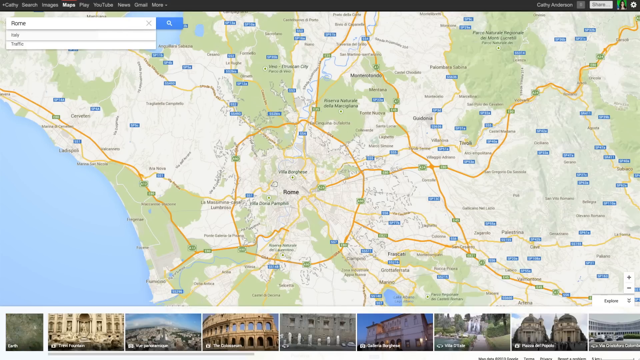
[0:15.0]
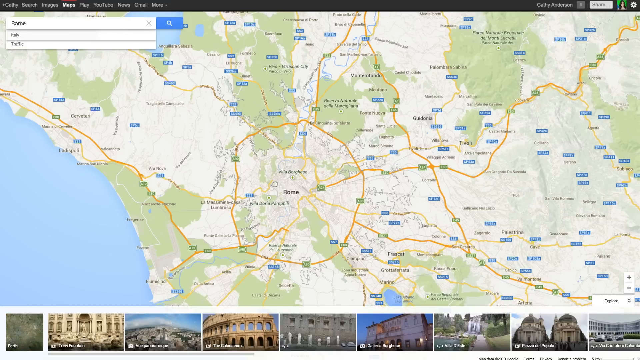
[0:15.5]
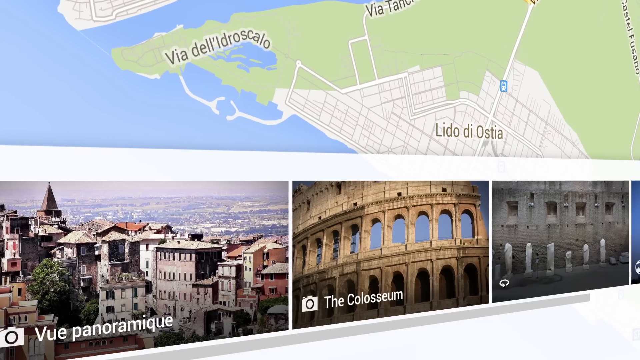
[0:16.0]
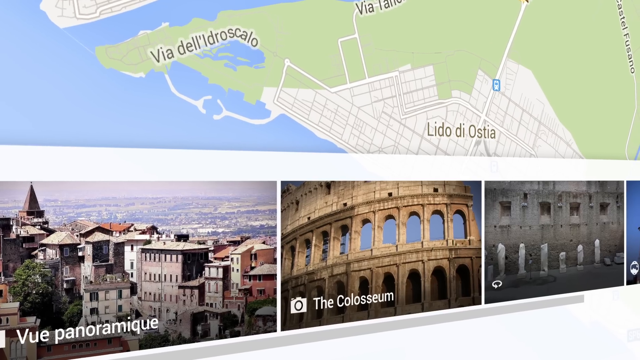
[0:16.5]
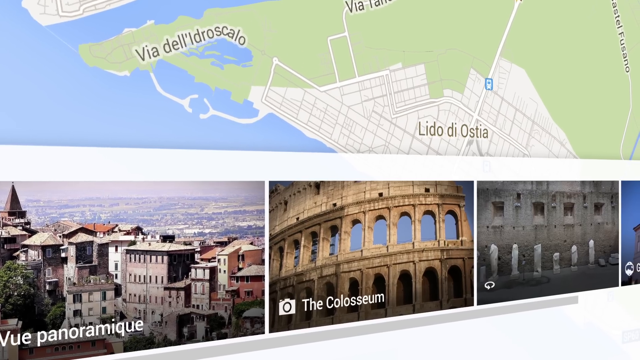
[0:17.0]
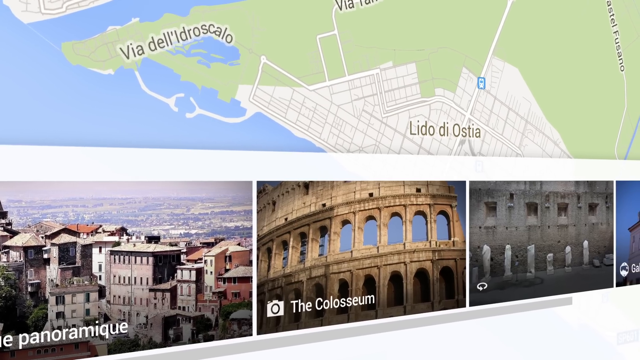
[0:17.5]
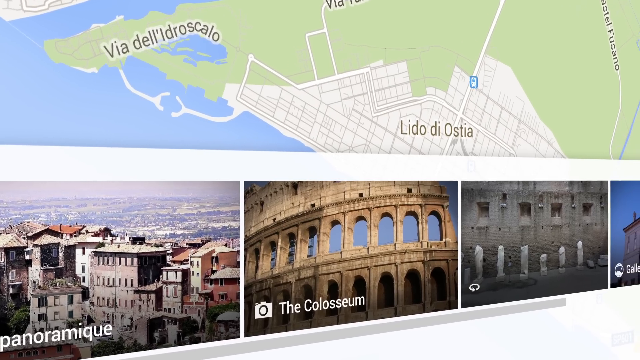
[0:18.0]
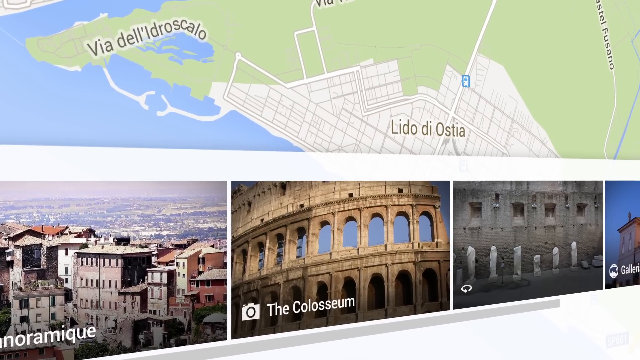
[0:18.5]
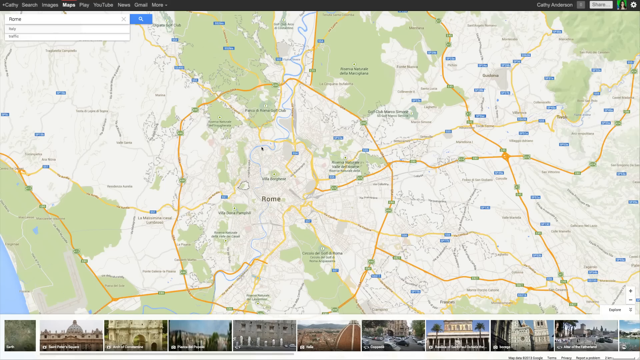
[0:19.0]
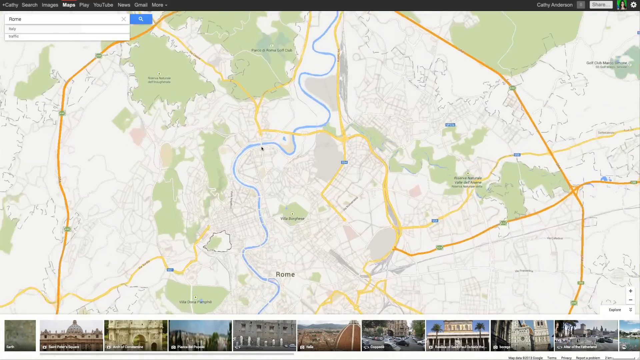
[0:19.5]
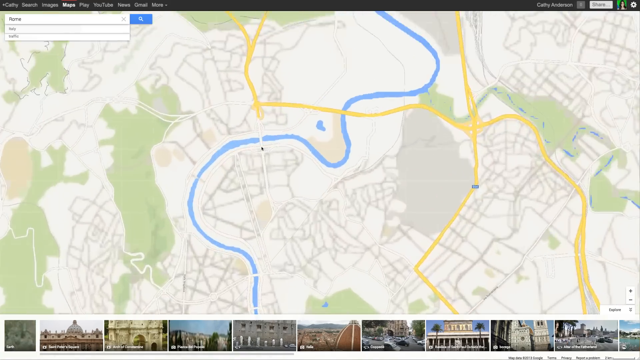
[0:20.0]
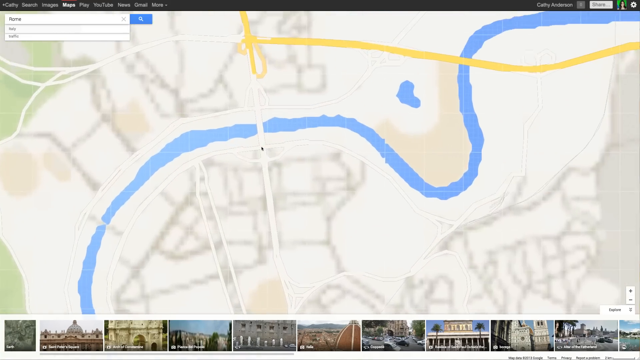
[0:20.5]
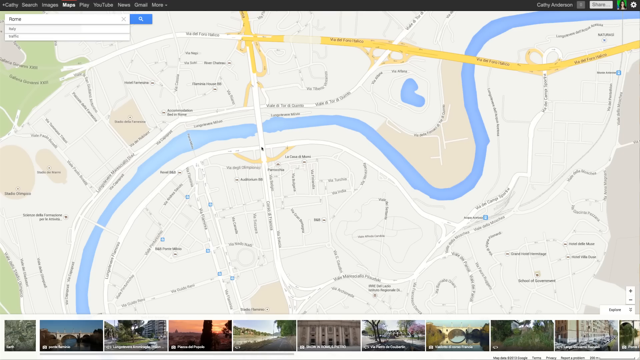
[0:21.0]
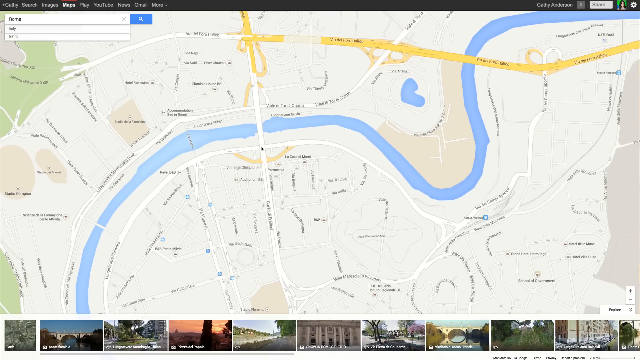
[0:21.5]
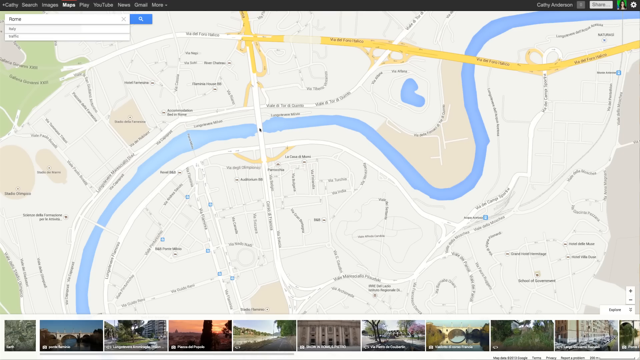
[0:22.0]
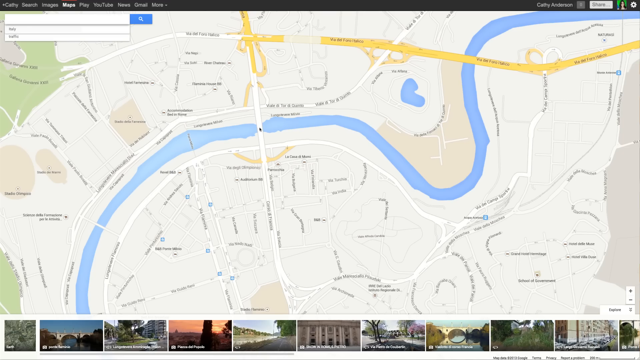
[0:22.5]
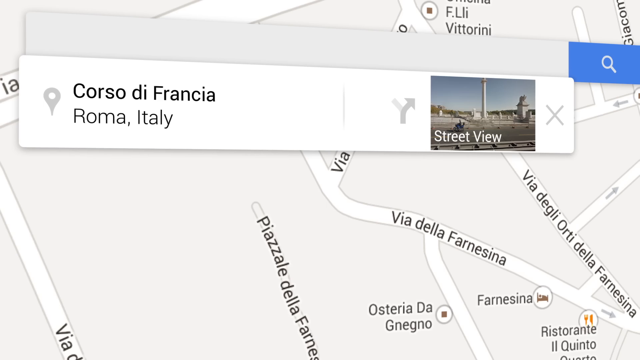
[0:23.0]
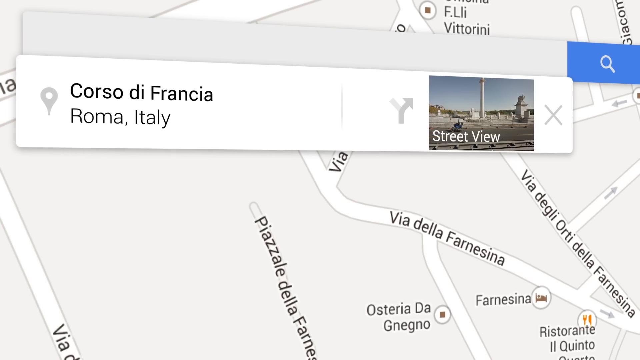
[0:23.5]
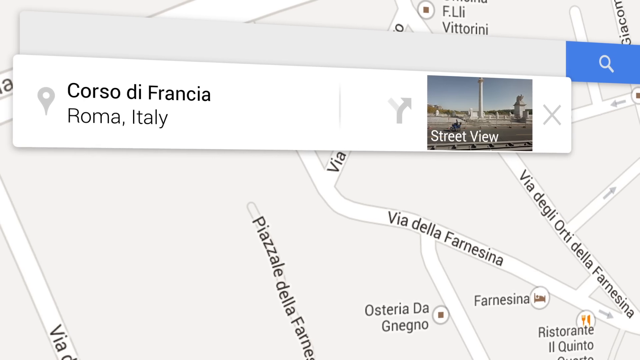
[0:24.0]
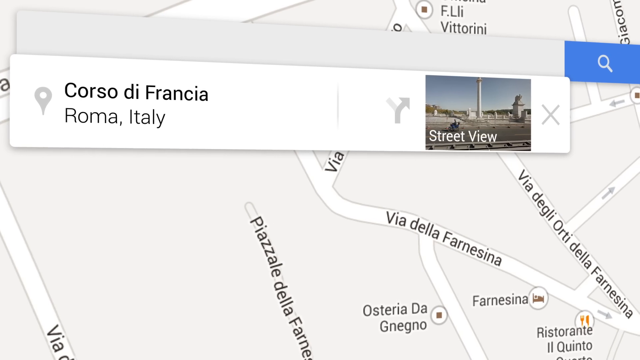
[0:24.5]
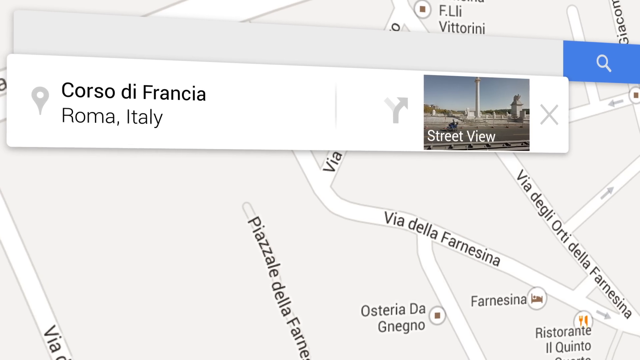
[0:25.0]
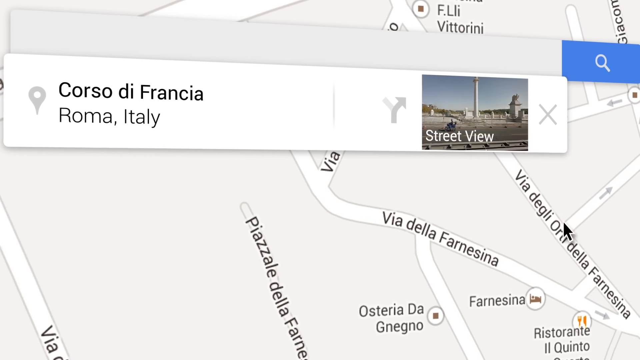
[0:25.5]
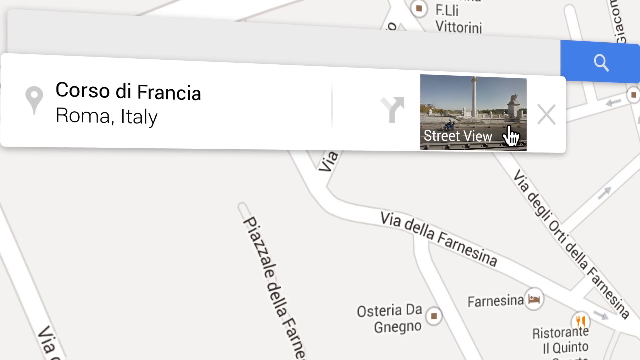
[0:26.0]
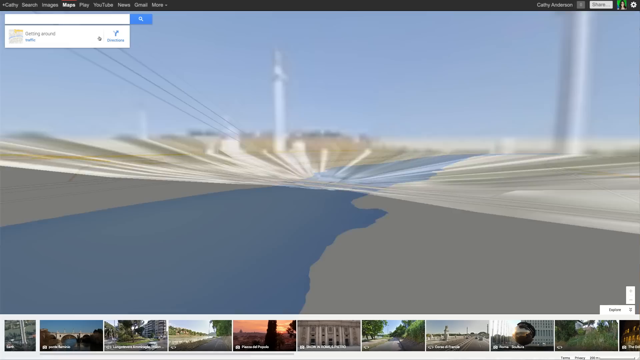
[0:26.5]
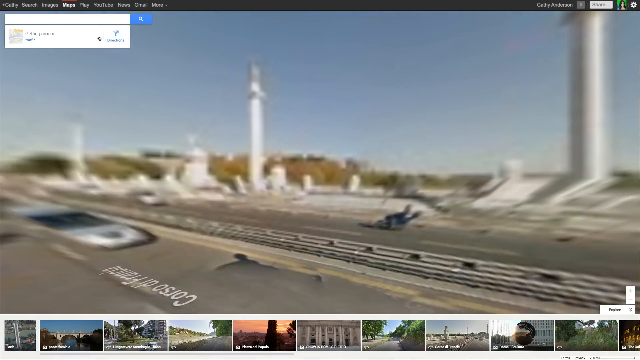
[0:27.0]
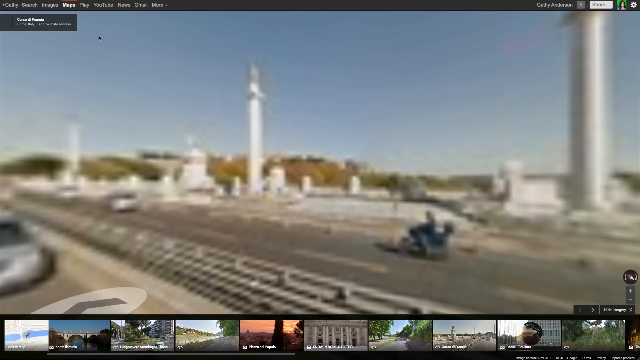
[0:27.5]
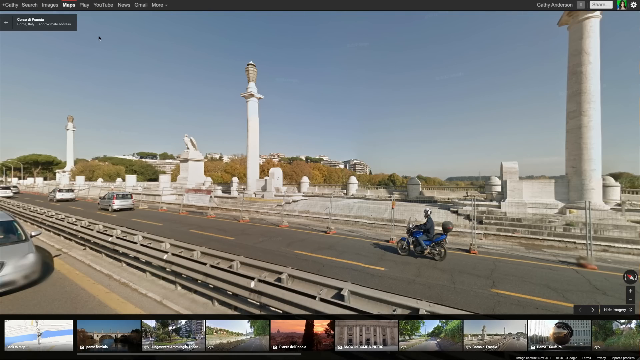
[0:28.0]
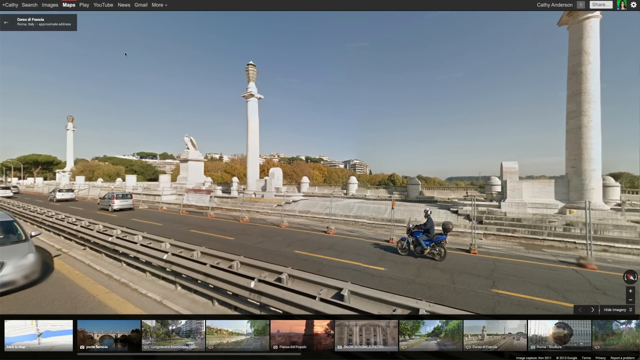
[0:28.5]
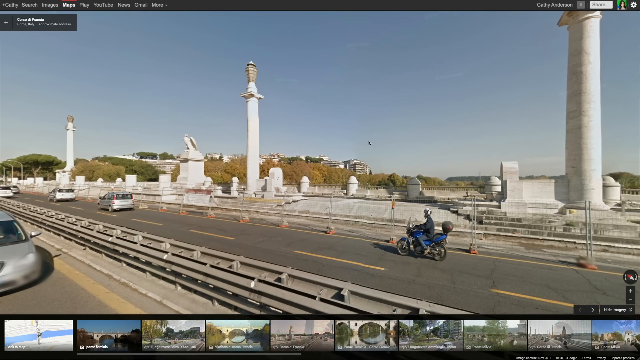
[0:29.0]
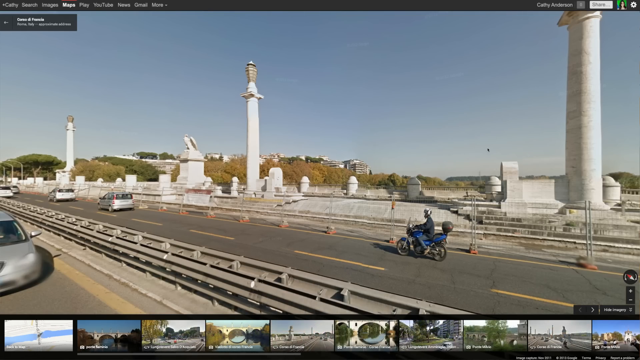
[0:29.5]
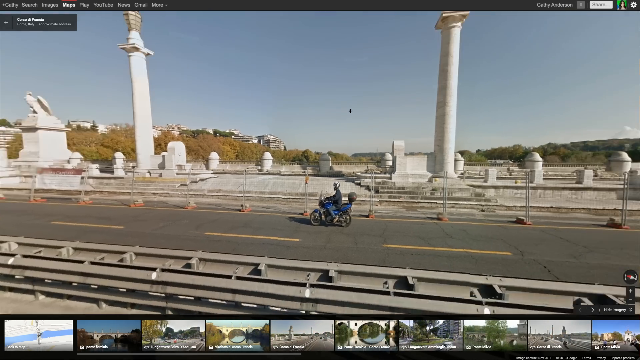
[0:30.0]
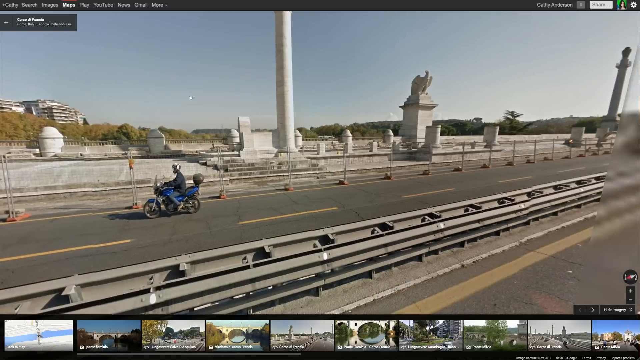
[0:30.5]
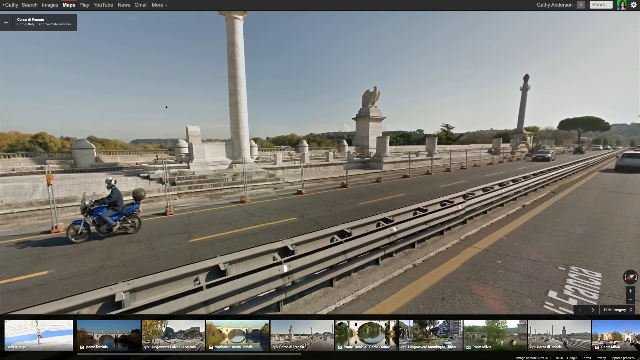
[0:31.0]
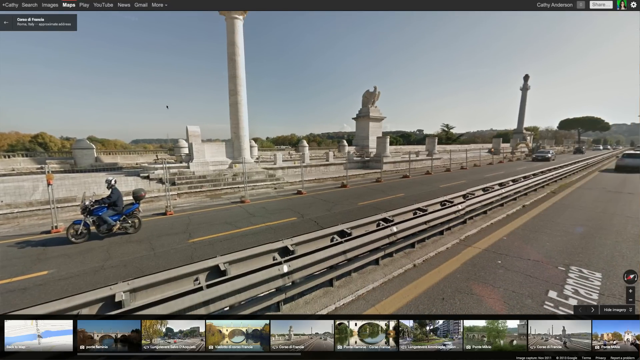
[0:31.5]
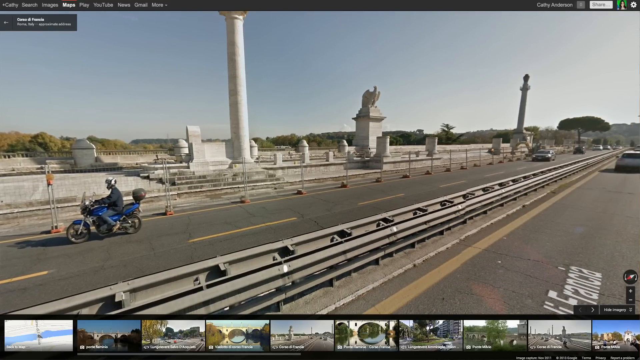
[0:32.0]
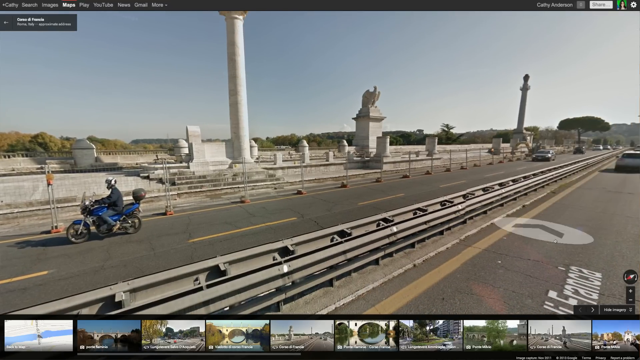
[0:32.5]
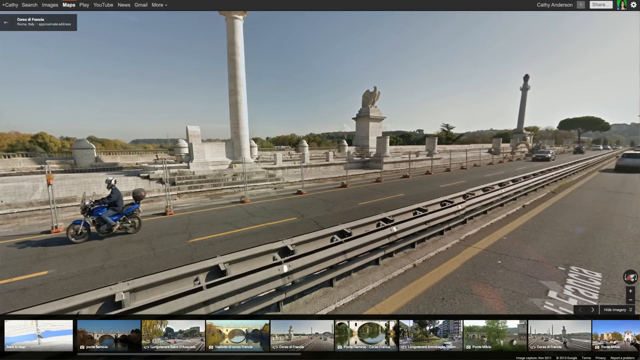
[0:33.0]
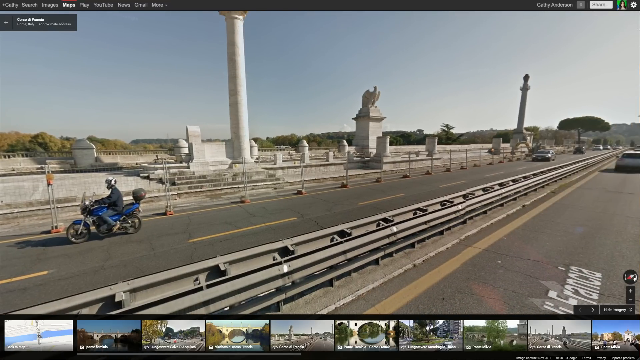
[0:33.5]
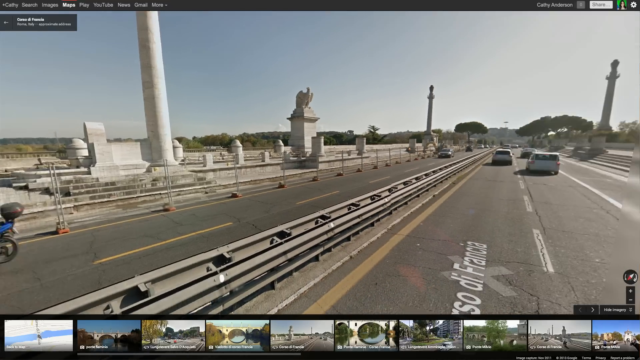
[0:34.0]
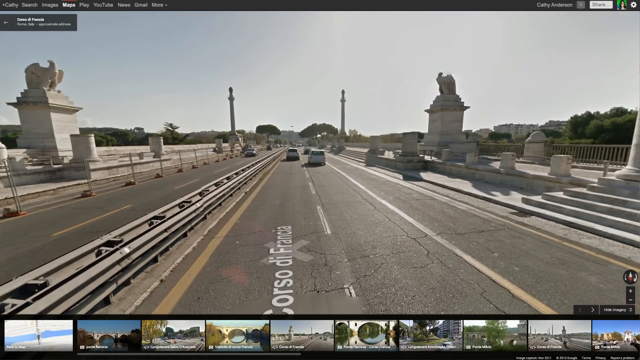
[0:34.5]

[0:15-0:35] A series of images of Rome appears, kind of in a sideways view. The view goes back to the map of Rome, which shows more images, including the Colosseum. The map zooms out, and a gallery of images is visible at the bottom. Eventually the person goes to Corsi di Franca and opens a street view. Someone maneuvers the street view of the area, showing the street, cars on the street, and somebody on a little bicycle. It is daytime.